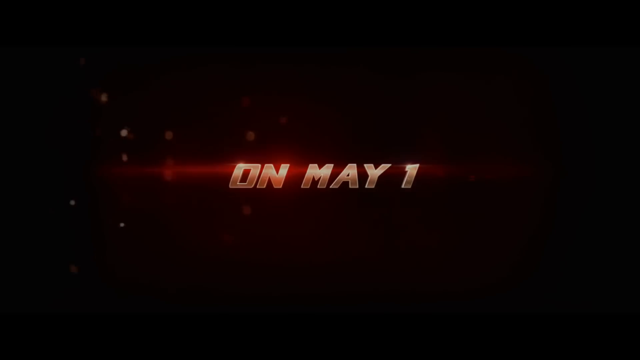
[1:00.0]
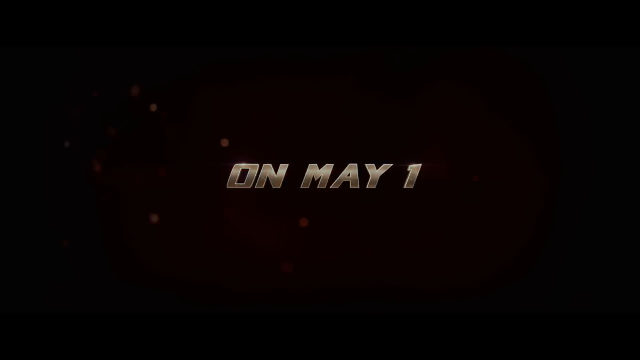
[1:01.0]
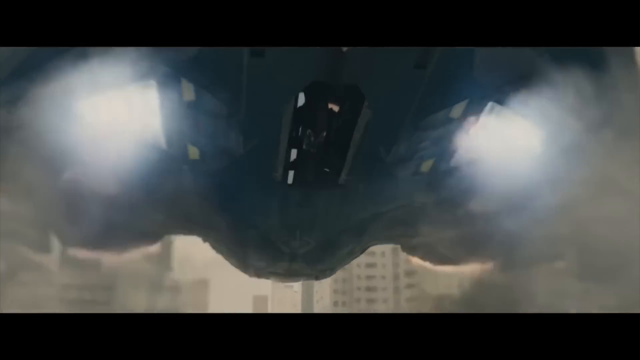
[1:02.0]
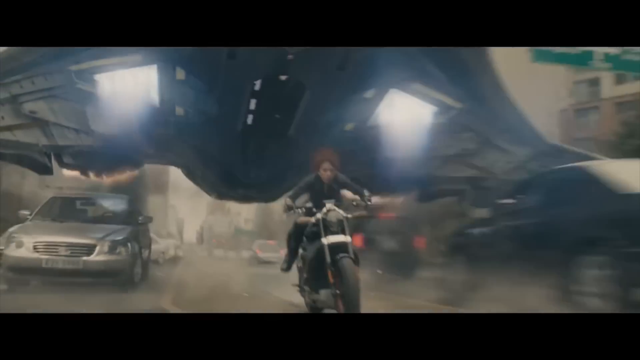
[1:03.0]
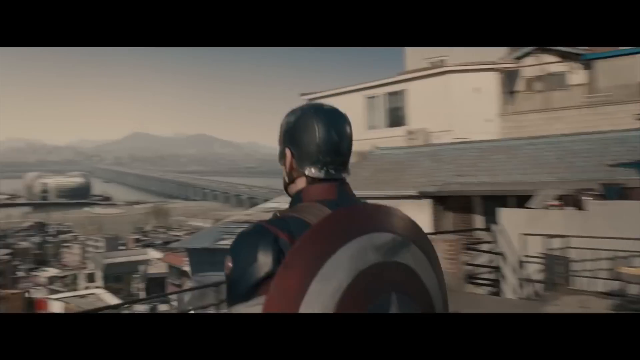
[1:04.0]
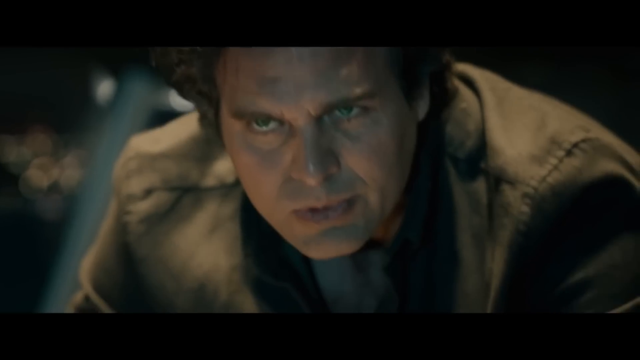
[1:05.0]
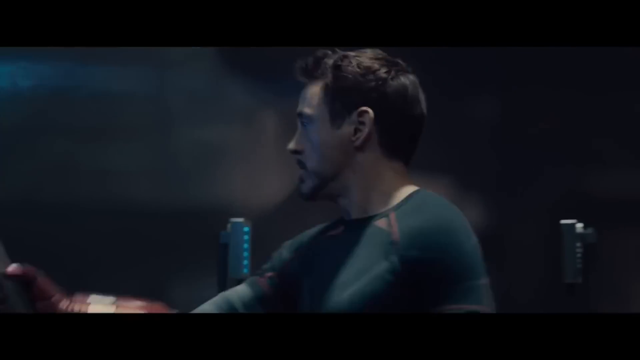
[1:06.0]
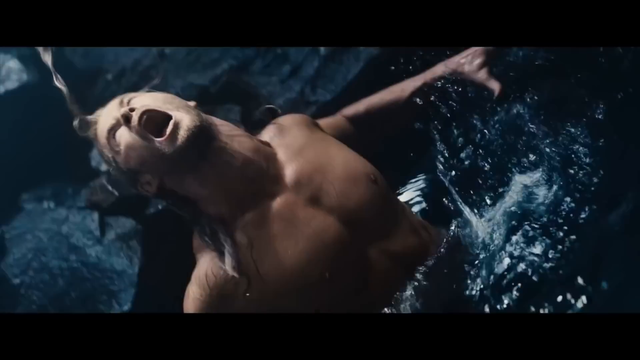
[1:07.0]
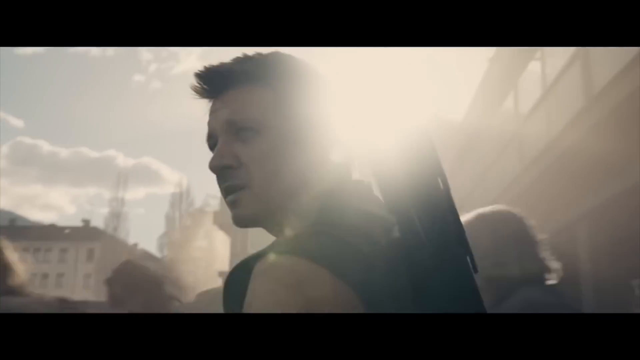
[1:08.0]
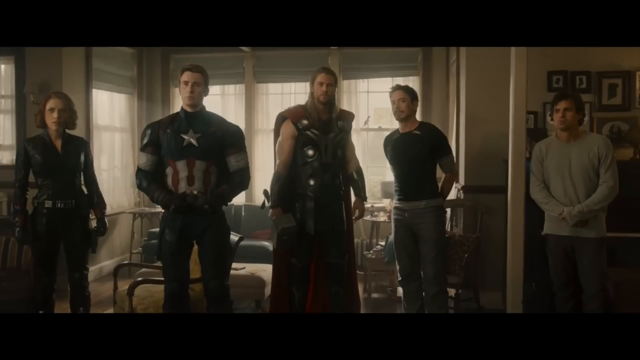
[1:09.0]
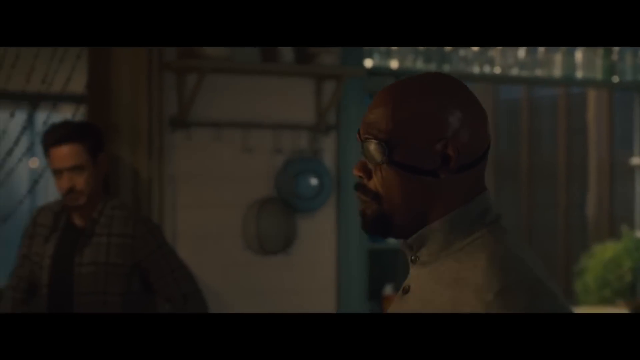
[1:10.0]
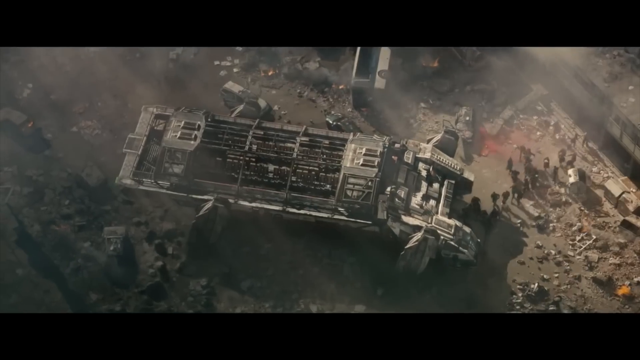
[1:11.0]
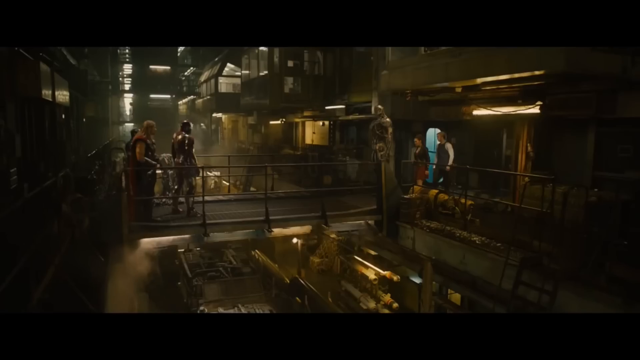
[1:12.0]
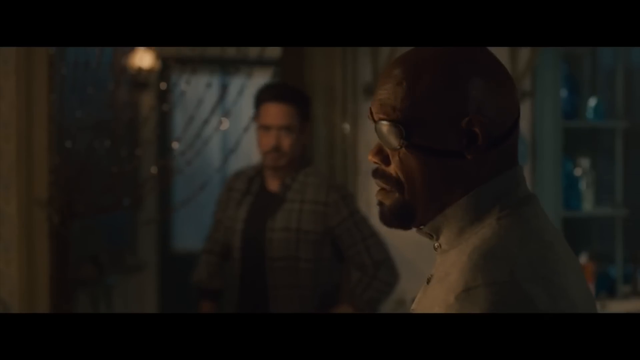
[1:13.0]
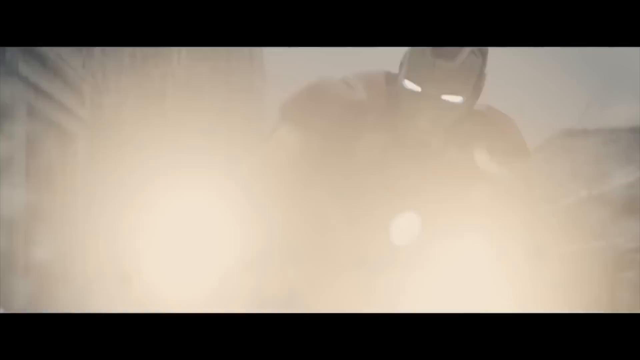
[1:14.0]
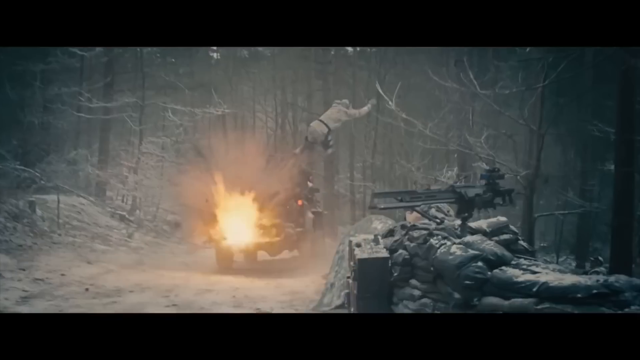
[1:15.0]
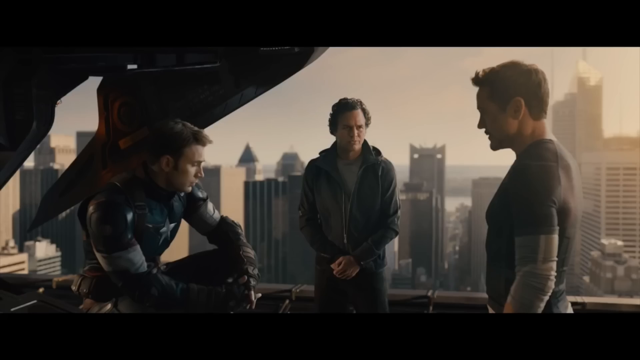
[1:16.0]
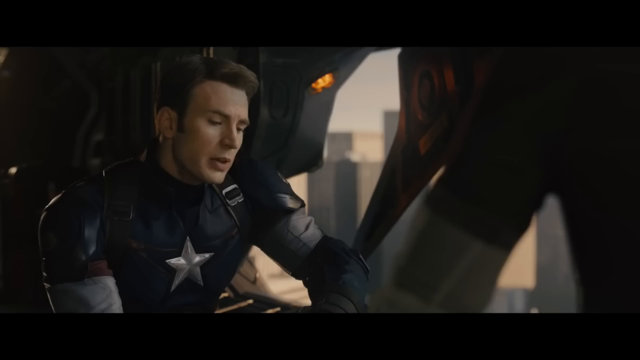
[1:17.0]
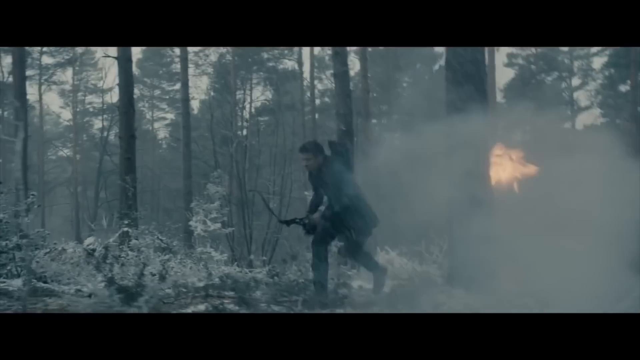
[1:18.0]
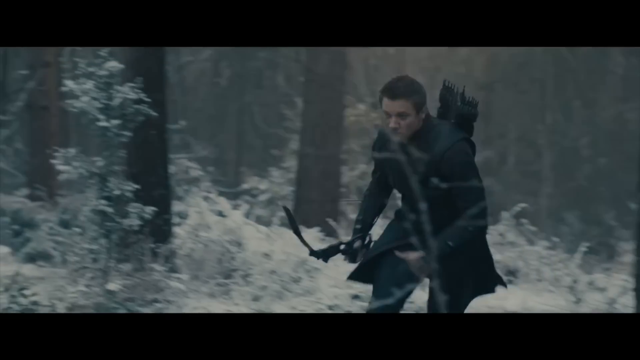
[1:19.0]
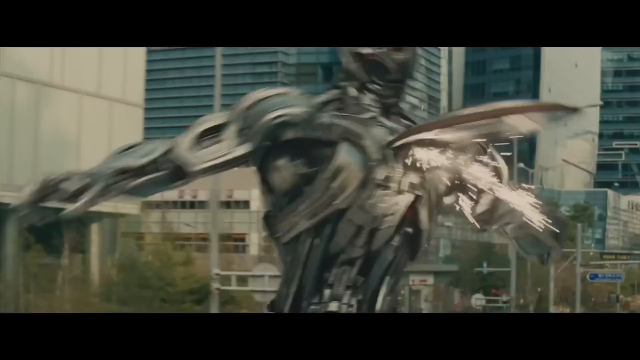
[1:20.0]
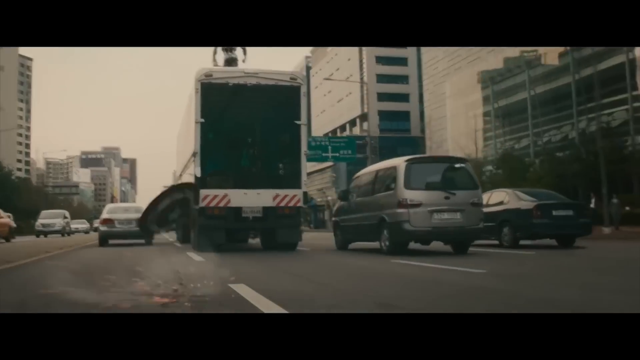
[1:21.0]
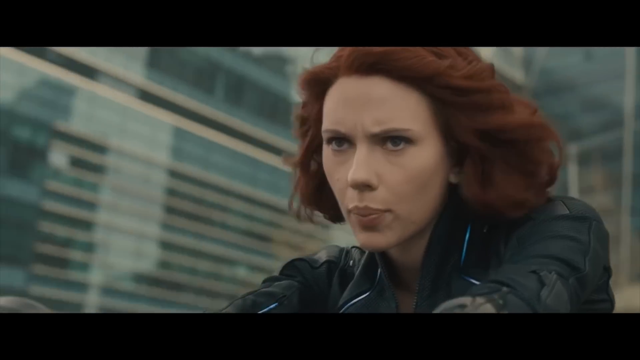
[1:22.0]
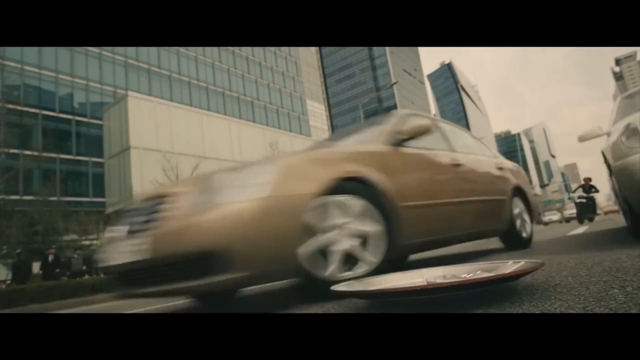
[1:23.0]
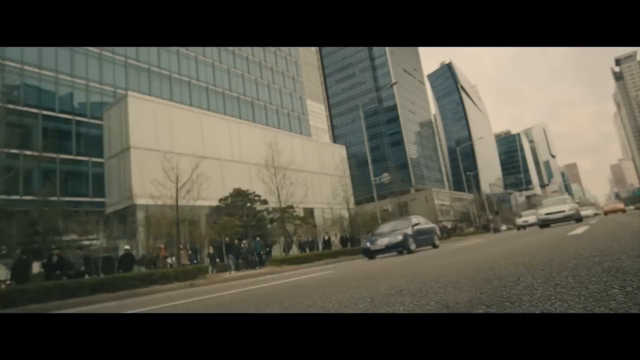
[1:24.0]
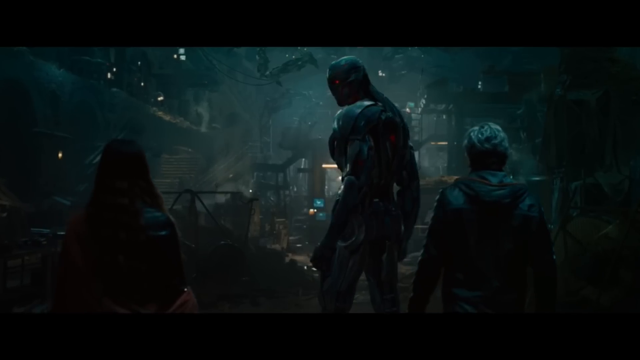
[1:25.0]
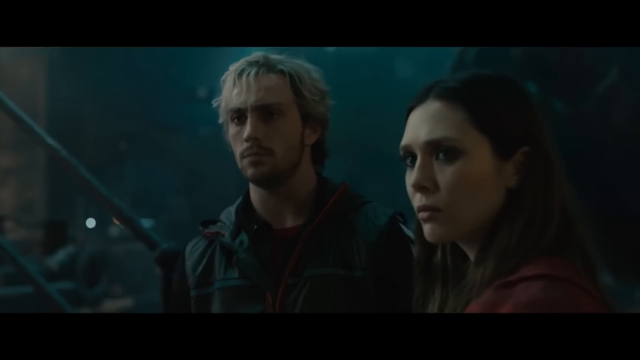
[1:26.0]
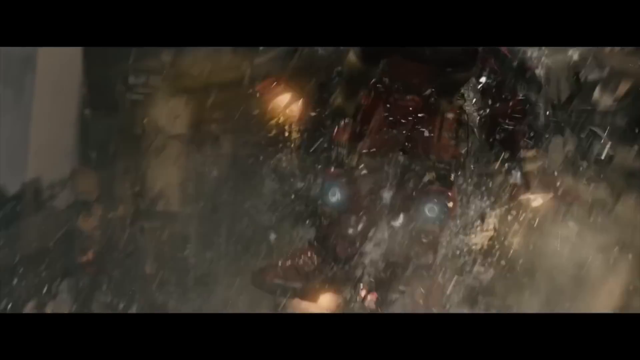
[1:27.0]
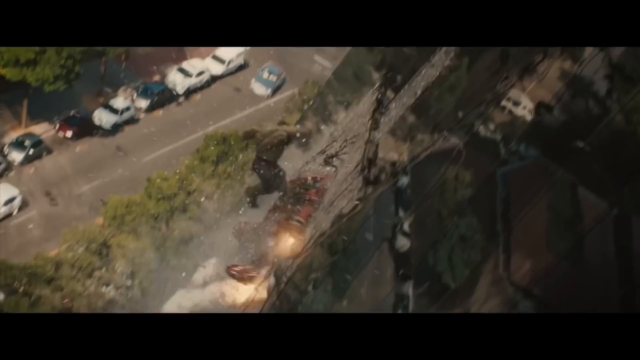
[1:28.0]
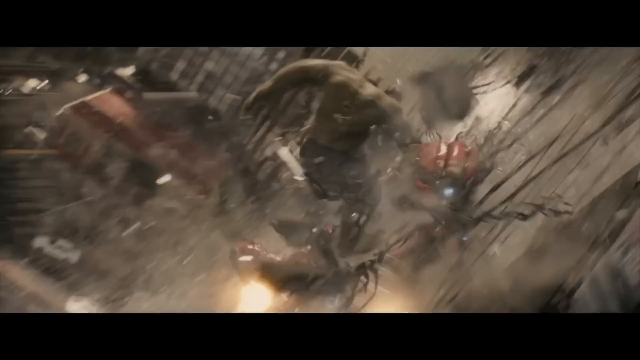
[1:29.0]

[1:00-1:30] A dark black background appears with red lighting and sparkles on the screen that look like flames. A spaceship appears, and Scarlet Witch comes from it. Captain America appears, followed by Mark turning into Hulk, with green eyes. Iron Man takes what looks to be a stick, and Thor stands on the horizon in complete anger. Hawkeye appears, then a meeting, and then Iron Man and Thor assemble for what looks to be a battle. Iron Man fights in a small area against what looks to be the same cyborg as before. A few scenes show Captain America and Iron Man, followed by street views in a few places in the city. The witch is in a meeting of three that looks to be a team-up, and then Hulk destroys buildings as he fights a big cyborg.